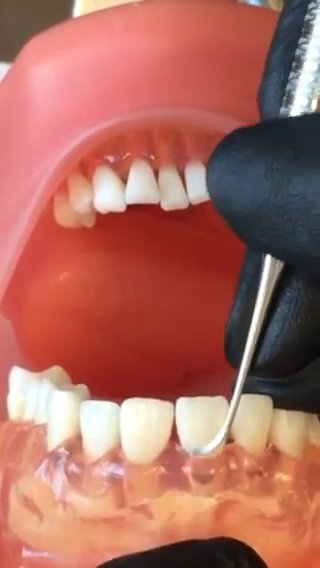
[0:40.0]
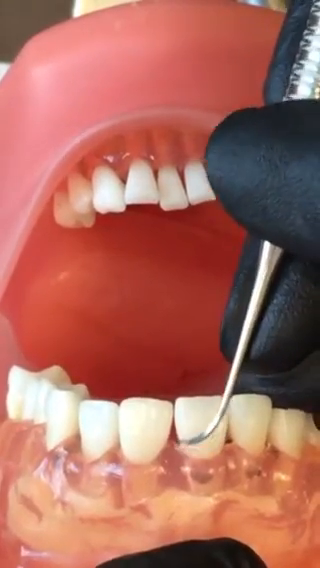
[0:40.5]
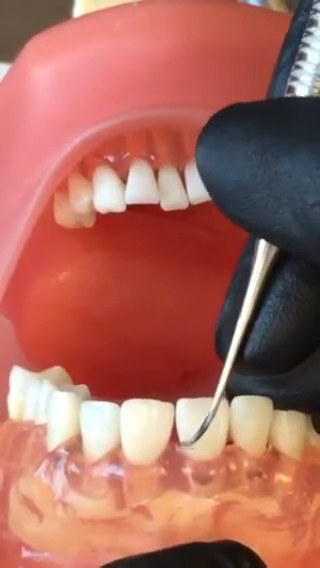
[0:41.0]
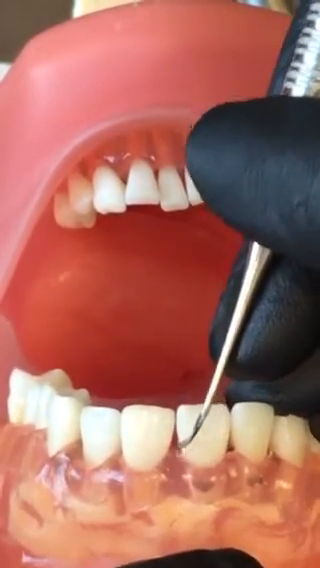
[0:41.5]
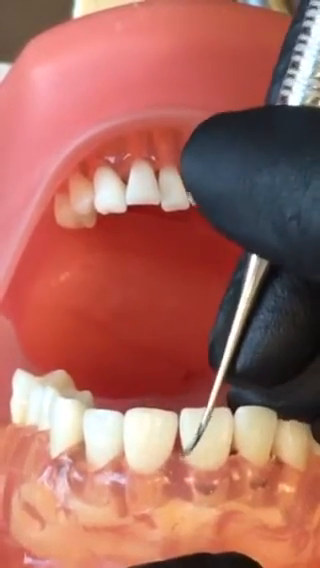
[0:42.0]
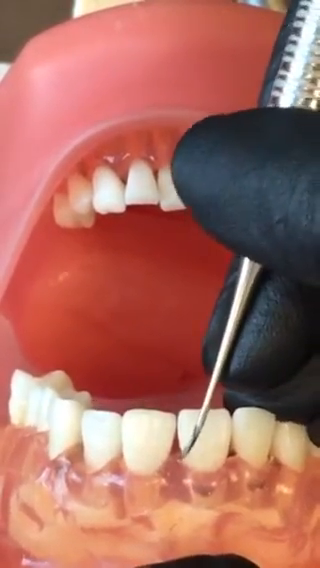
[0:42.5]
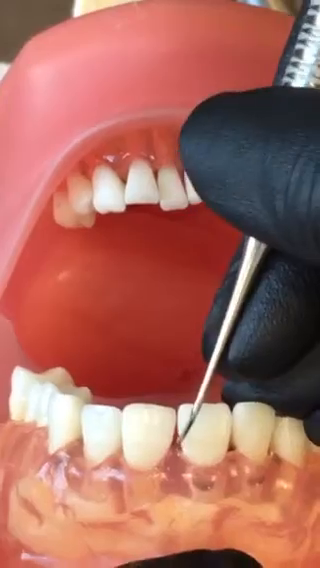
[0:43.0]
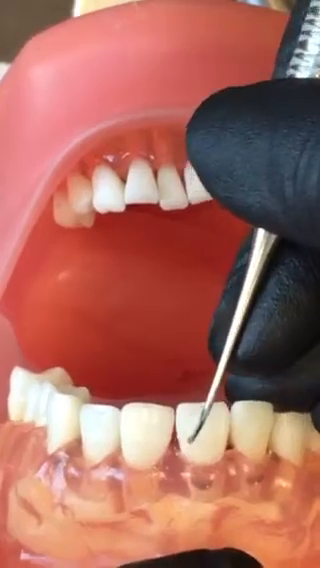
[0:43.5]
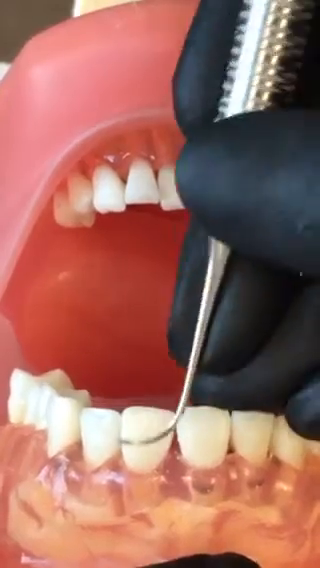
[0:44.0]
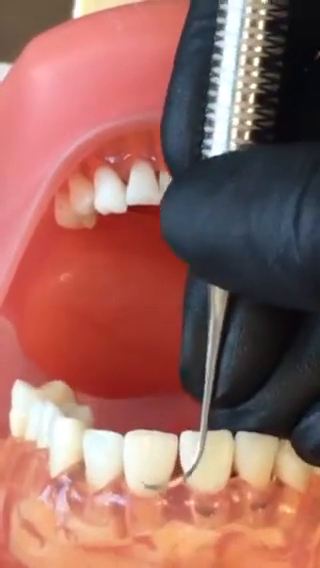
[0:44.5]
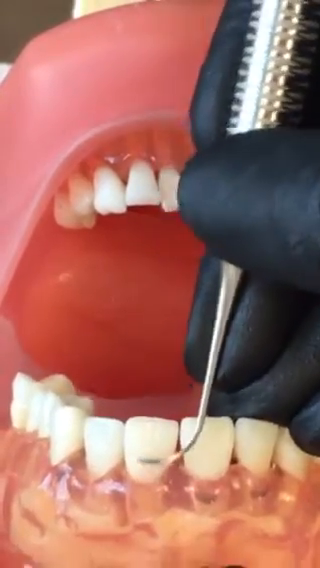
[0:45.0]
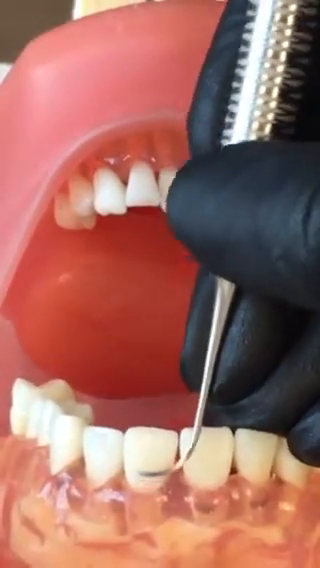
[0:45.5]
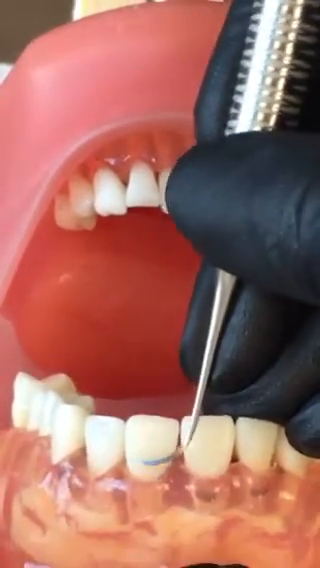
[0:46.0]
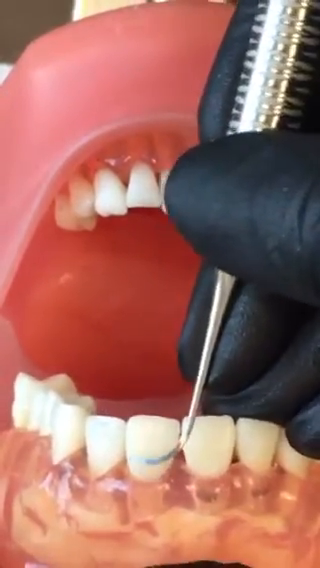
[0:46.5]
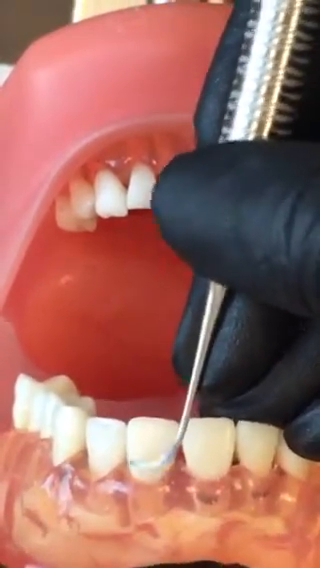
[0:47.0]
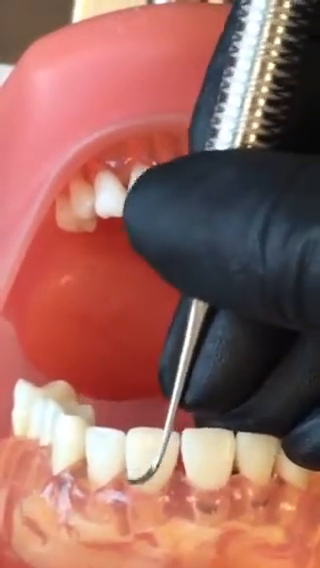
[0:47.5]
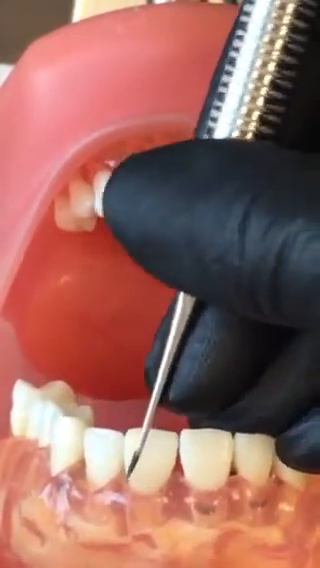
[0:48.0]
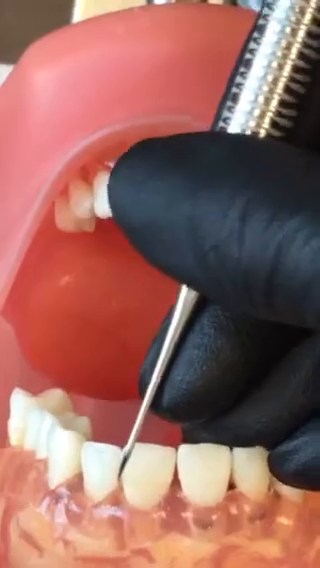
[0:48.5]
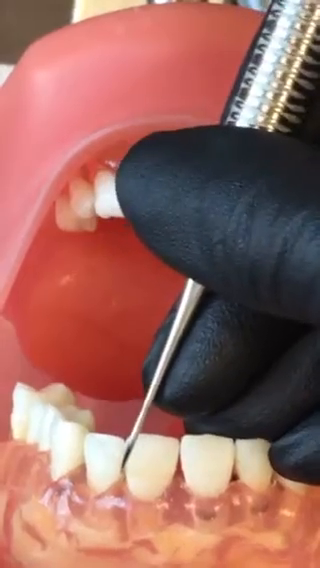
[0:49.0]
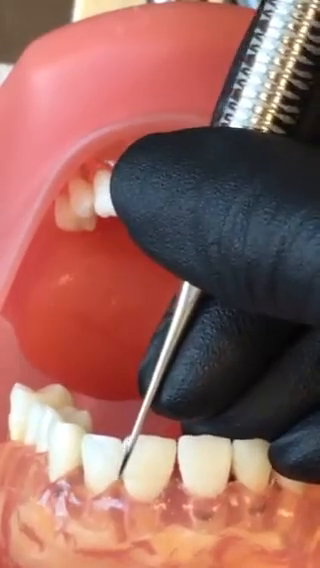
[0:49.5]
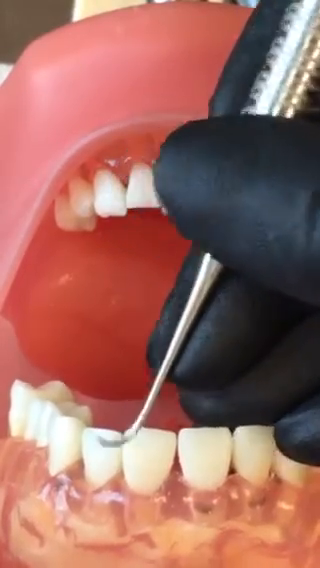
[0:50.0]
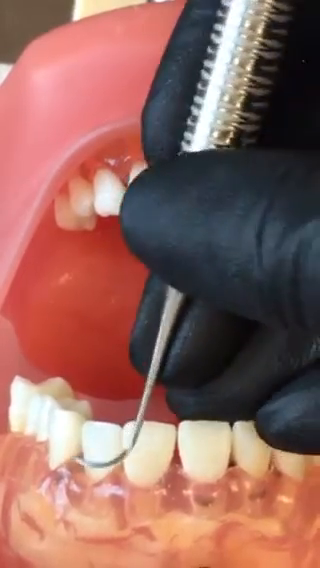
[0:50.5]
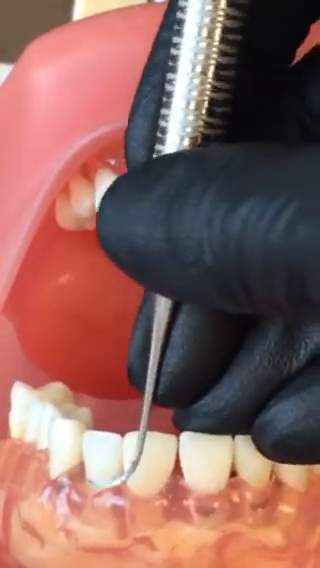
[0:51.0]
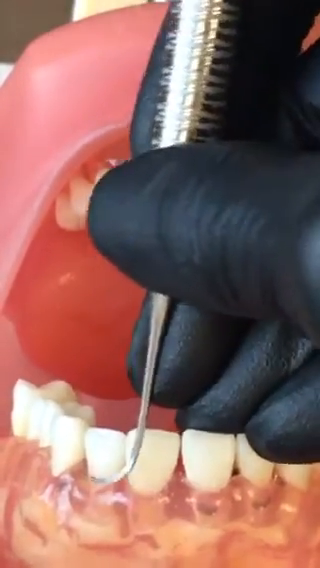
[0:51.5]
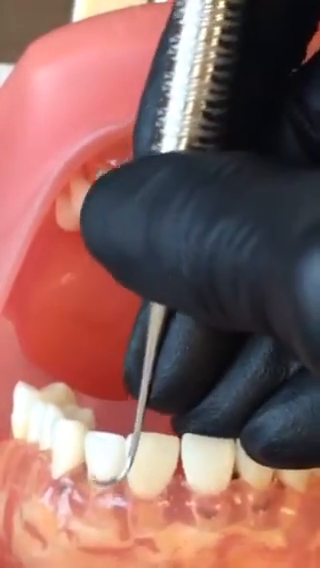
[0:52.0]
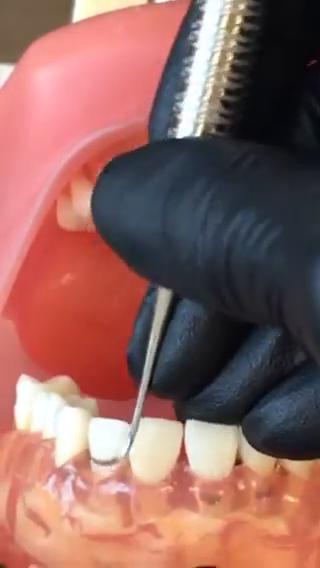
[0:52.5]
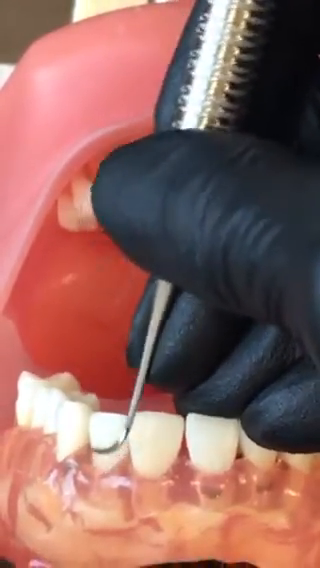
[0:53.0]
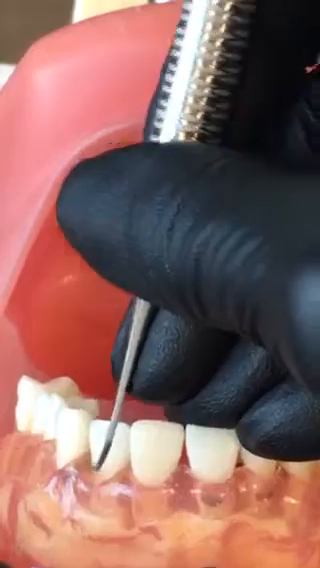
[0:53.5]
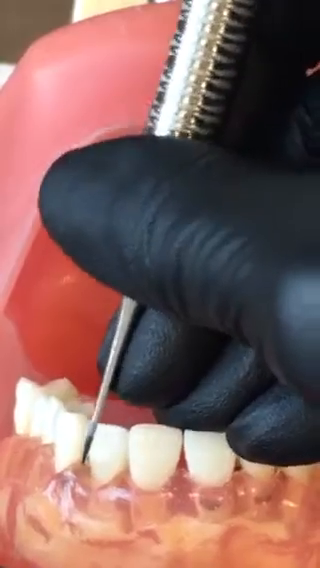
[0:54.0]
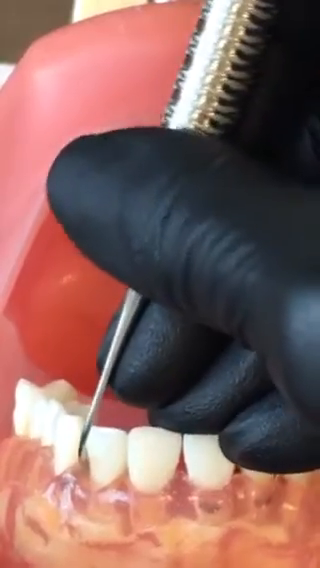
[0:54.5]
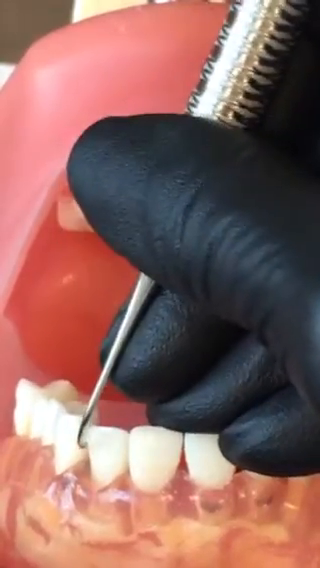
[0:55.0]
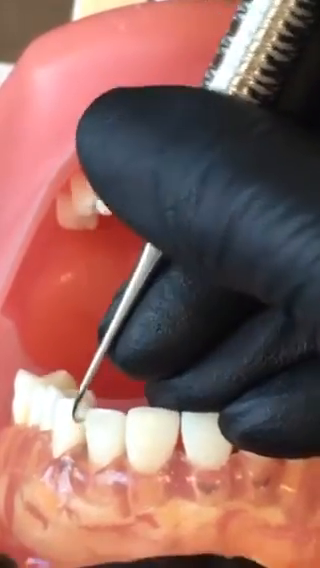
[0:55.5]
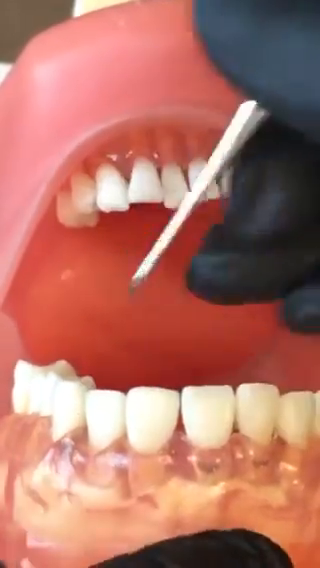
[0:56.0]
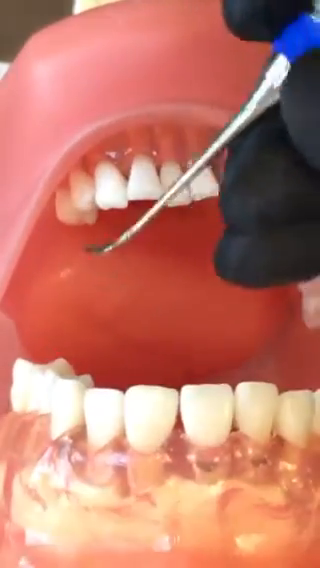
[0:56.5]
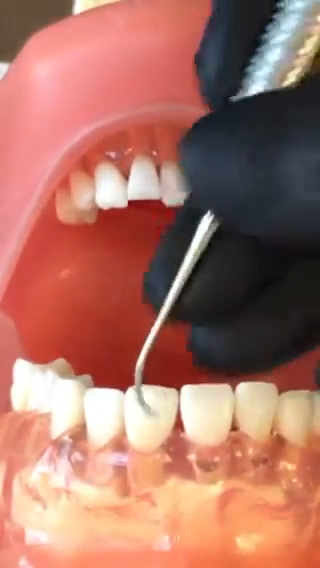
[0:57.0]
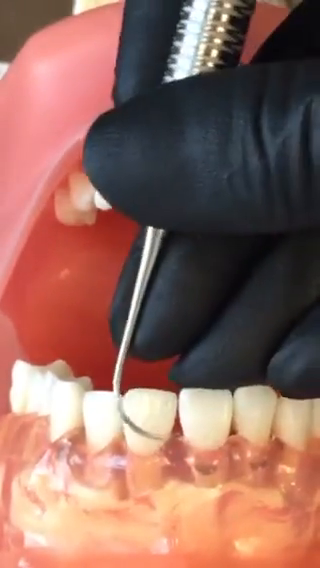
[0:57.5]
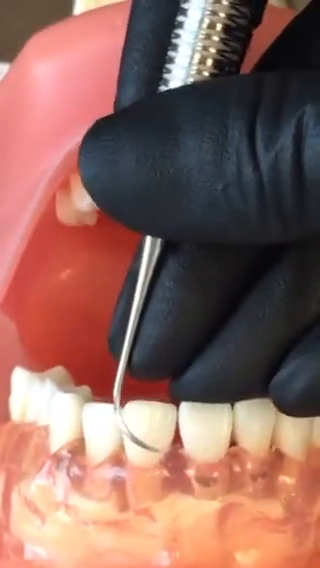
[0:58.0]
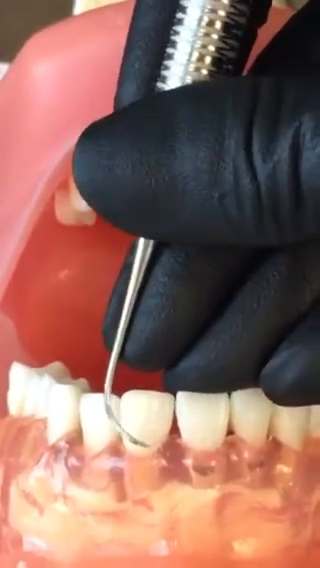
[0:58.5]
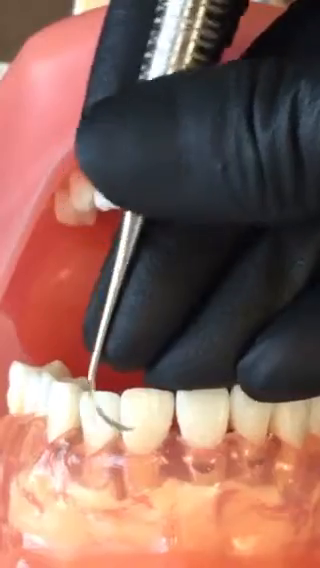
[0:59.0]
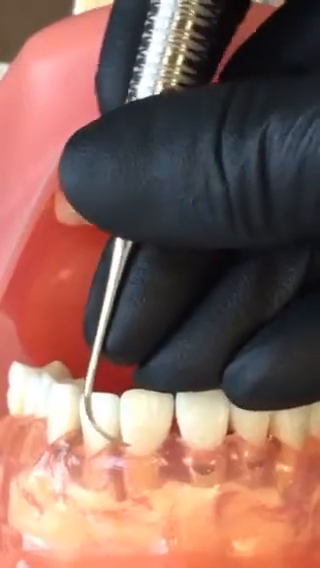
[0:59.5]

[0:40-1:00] The scraper goes over the tooth and then into the gap between the two front upper incisors, cleaning that area, not necessarily close to the gum line. It then moves to the next tooth, also a front incisor, and this time traces along the gum line, which is shaped like a U. It continues to the next tooth, moving toward the left of the video, cleaning each tooth individually, one by one. Toward the end, the scraper is flipped: it points to the left, and then it is flipped so that it points to the right.